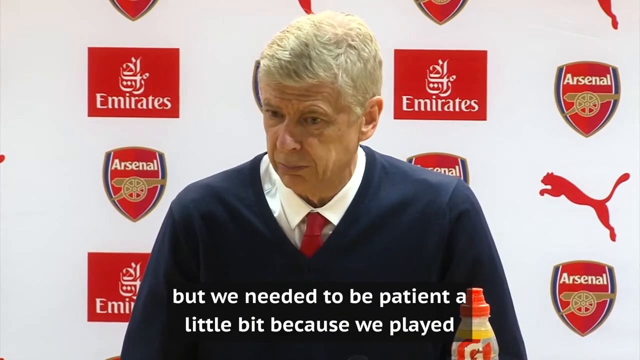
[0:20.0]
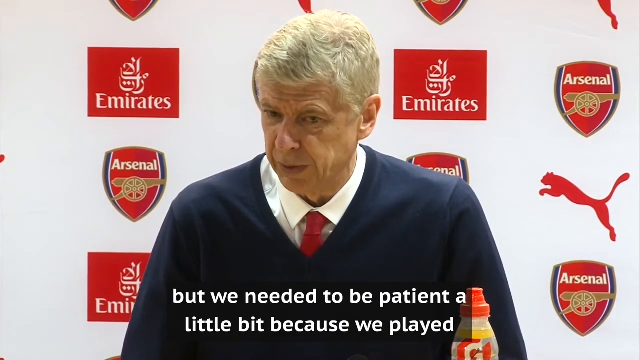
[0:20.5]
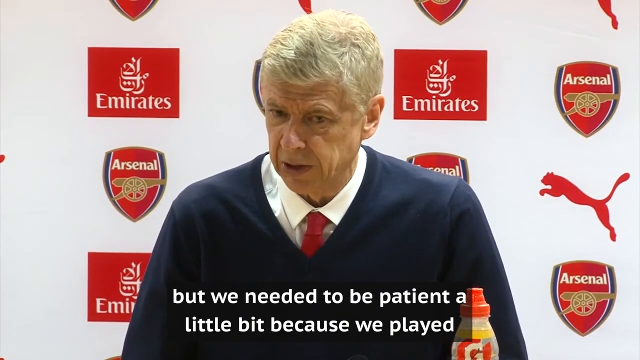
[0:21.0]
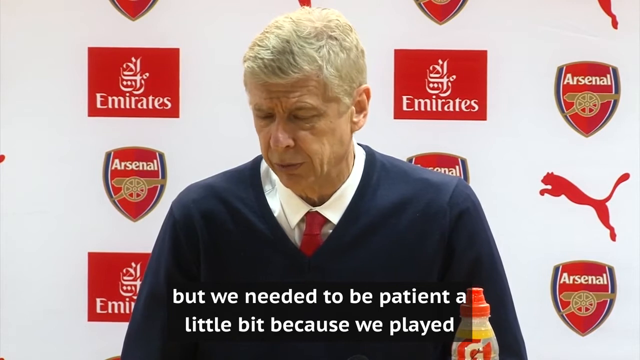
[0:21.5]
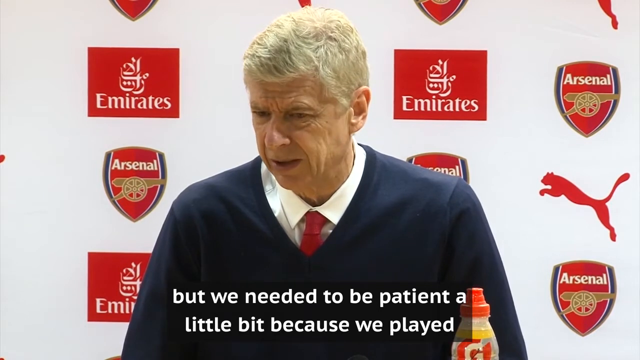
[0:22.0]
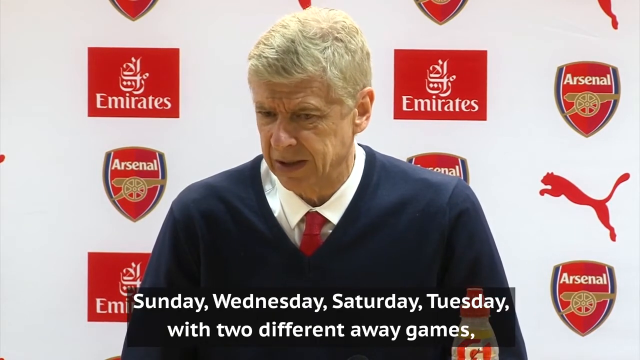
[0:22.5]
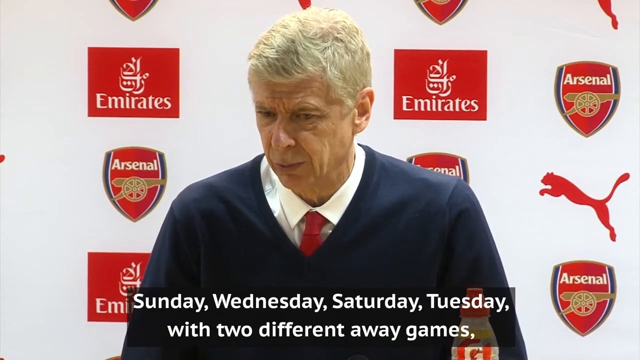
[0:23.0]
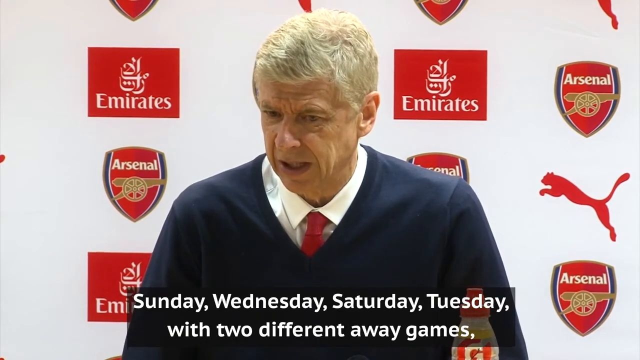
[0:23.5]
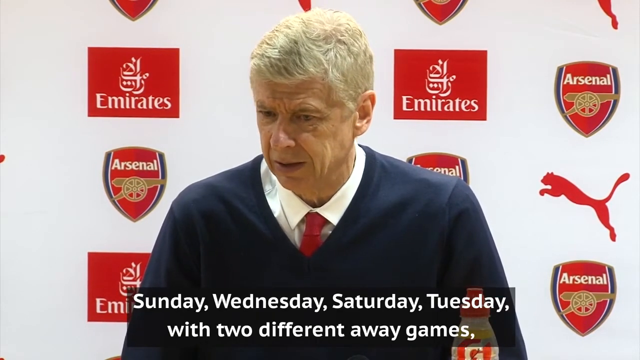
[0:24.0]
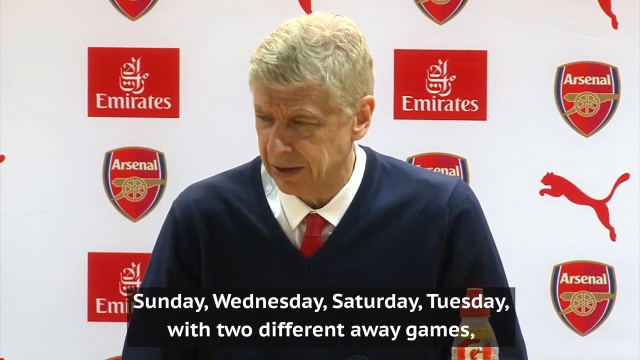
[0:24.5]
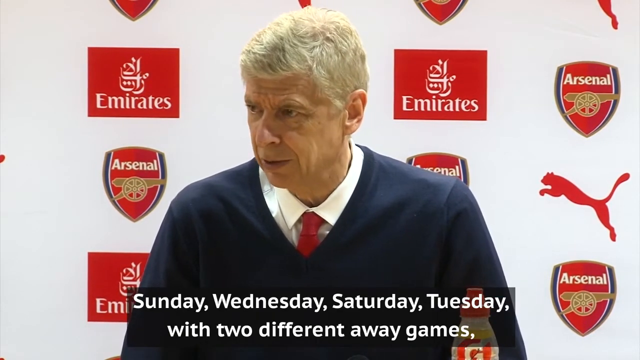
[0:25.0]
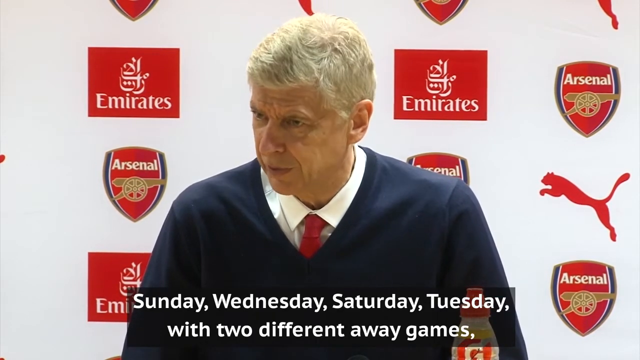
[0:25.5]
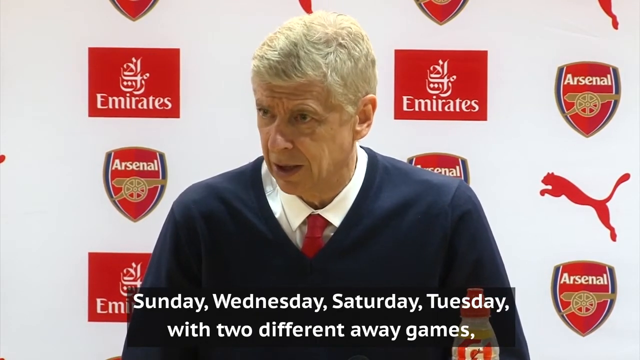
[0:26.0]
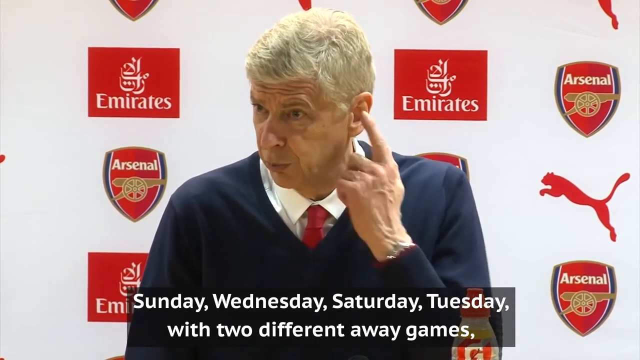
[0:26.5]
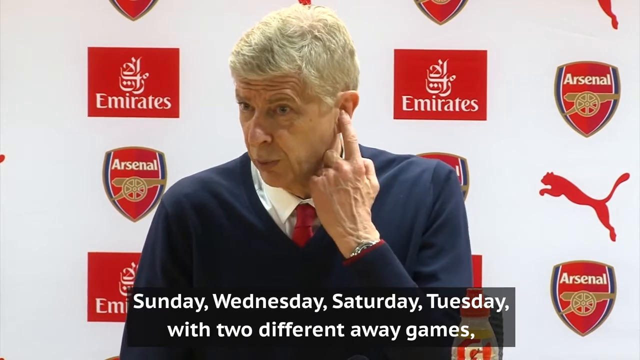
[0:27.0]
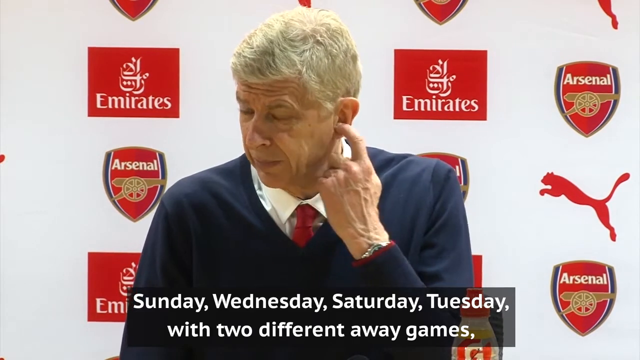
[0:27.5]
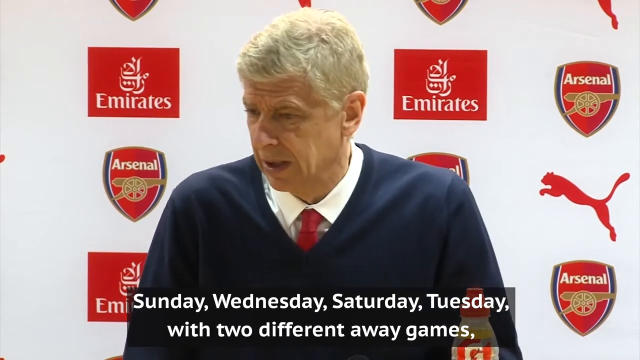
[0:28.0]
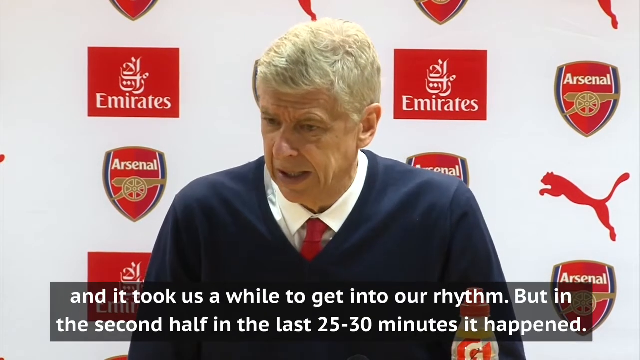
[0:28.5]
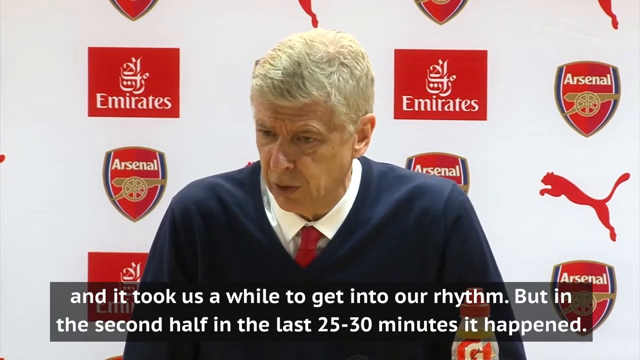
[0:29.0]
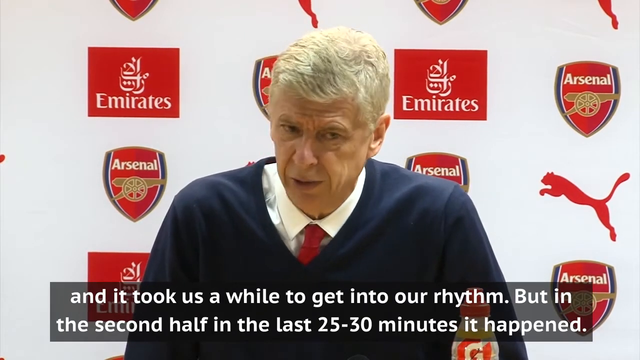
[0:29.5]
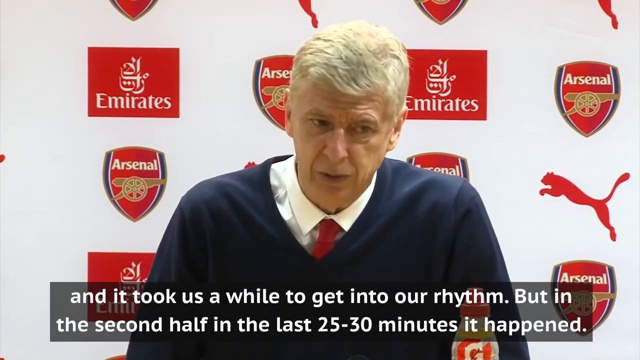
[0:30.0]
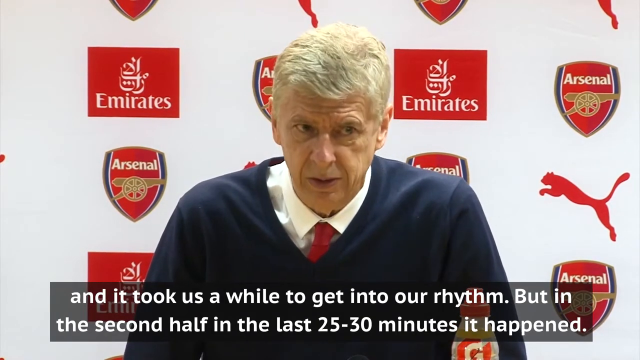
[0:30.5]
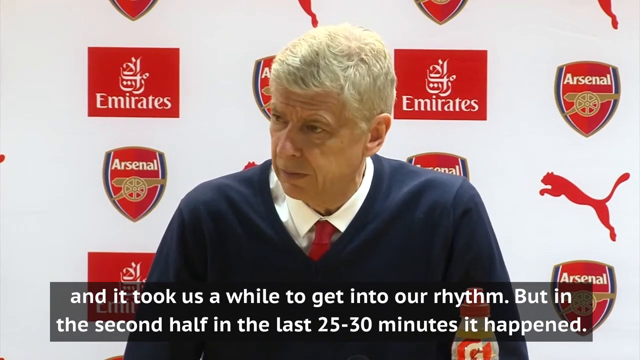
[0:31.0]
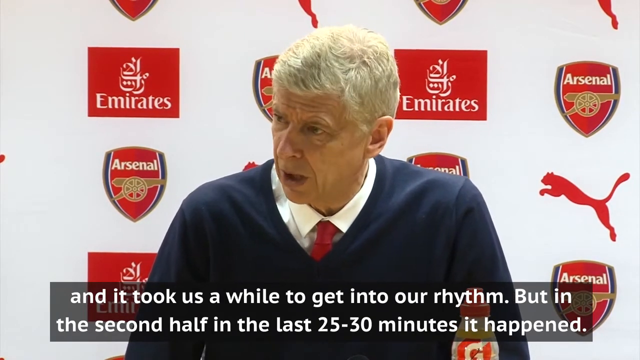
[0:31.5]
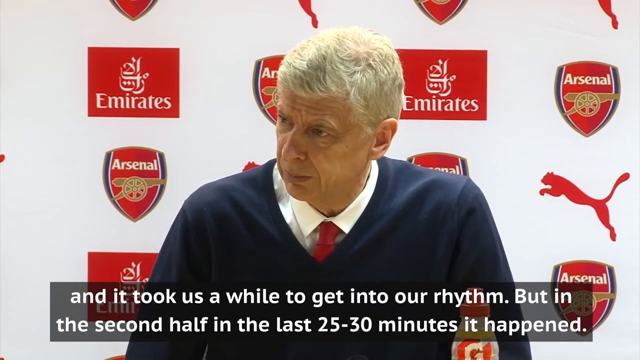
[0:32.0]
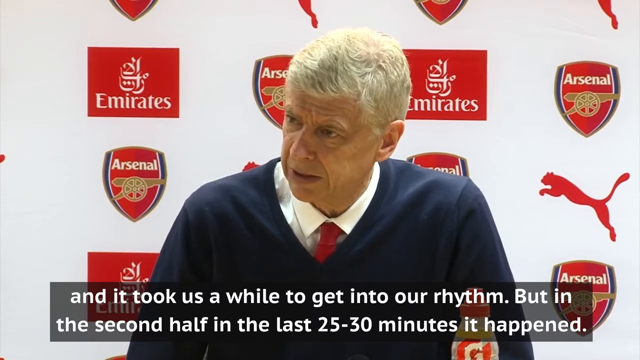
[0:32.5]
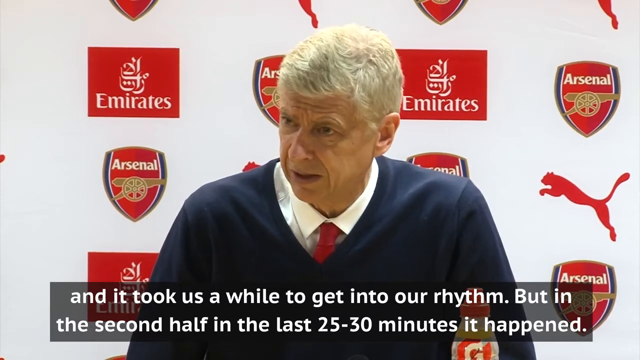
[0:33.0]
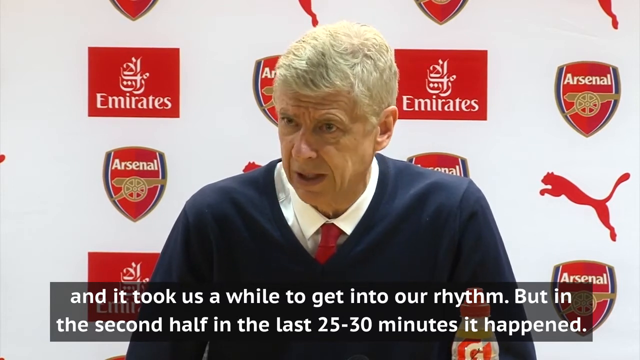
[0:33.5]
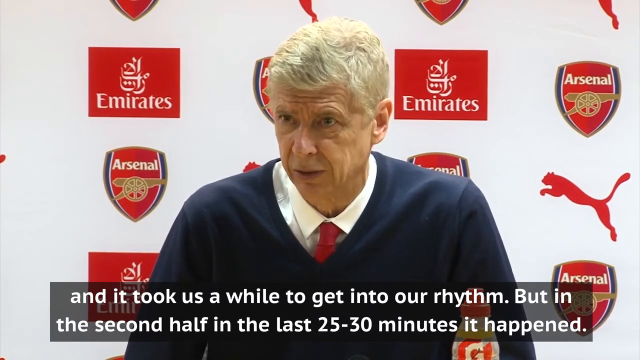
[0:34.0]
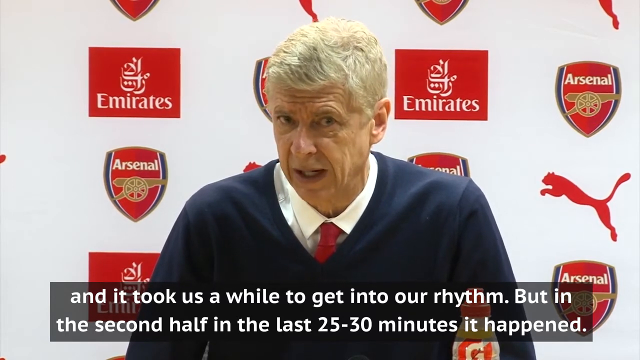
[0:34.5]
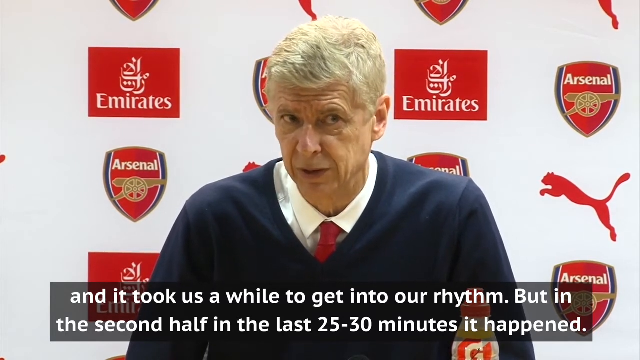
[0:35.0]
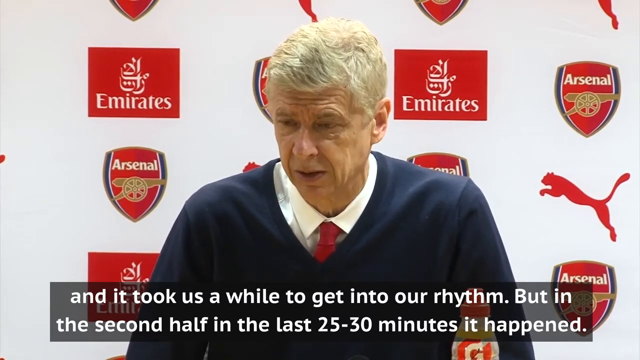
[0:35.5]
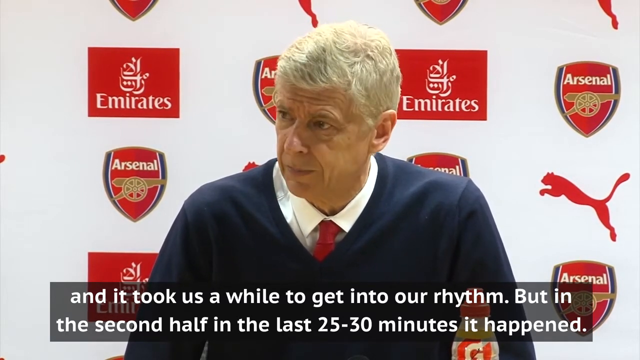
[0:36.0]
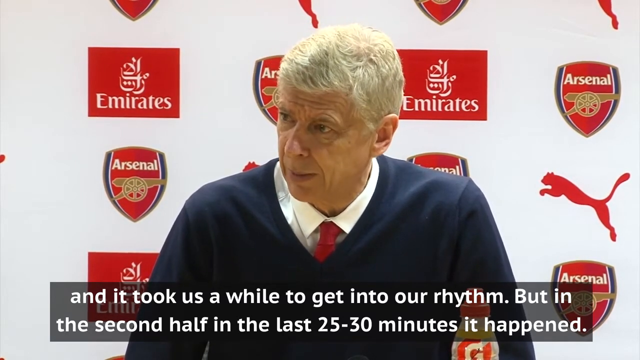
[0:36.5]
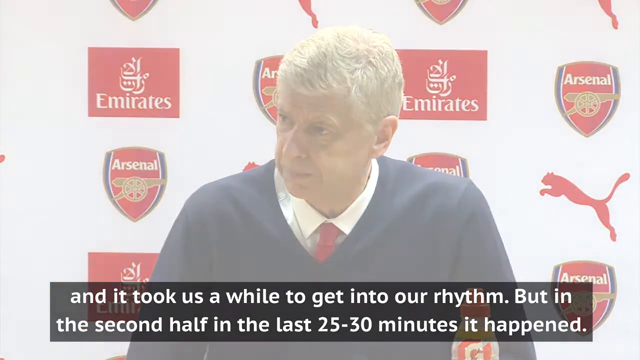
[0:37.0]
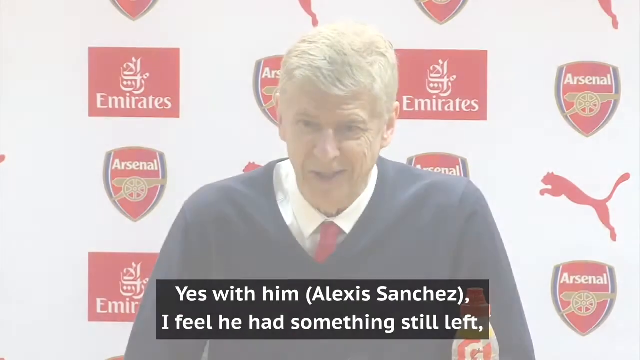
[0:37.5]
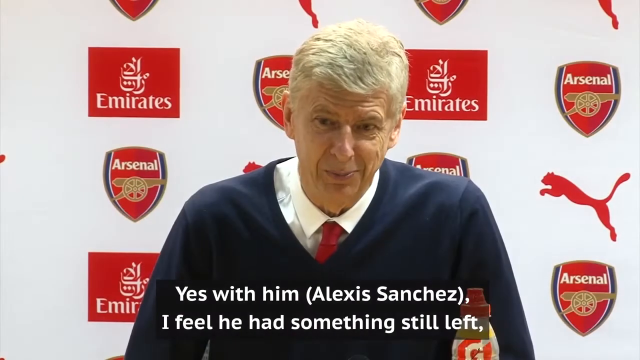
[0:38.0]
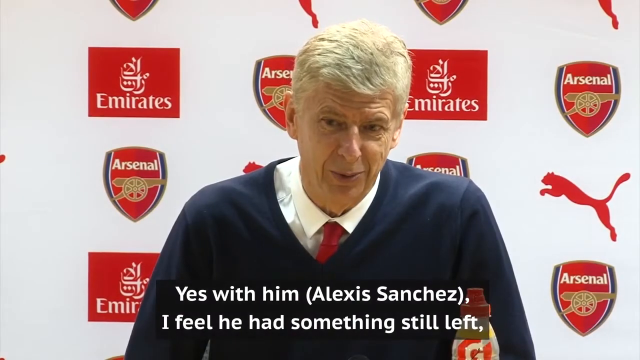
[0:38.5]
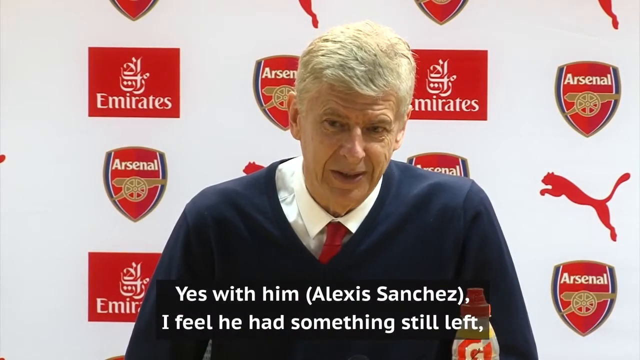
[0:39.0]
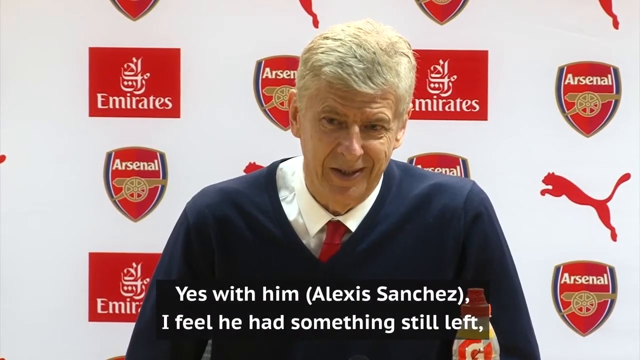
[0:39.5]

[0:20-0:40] Arsene Wenger sits, looking stern, with a Gatorade bottle on the far right. He says, "but we need to be patient a little bit because we played Sunday, Wednesday, Saturday, Tuesday, with two different away games." He looks very disgruntled, angry and bitter as he speaks, looking downward toward his feet. He then moves his head from right to left. While talking, he puts his left index finger into his left ear, clearing it out. He says, "and it took us a while to get into our rhythm, but in the second half, in the last 25 or 30 minutes, it happened. Yes, with him, Alexis Sanchez, I felt he had something still left to give." Wenger then looks happy and smiles.